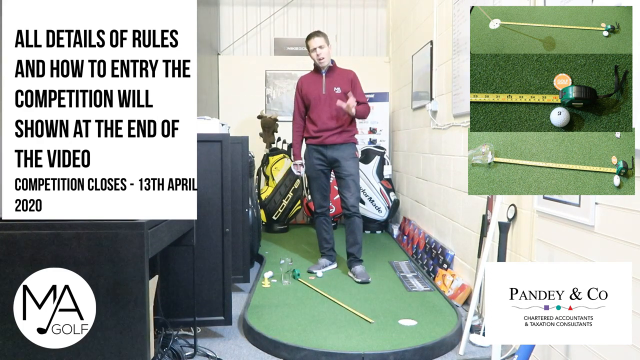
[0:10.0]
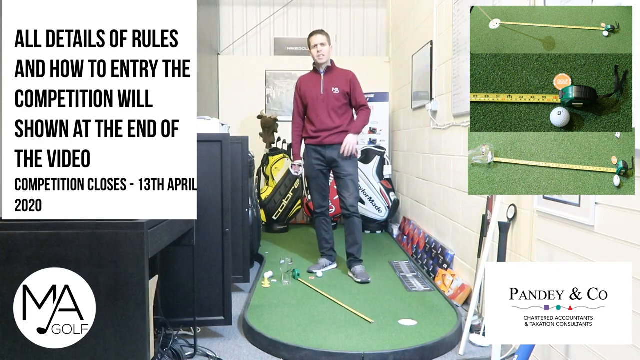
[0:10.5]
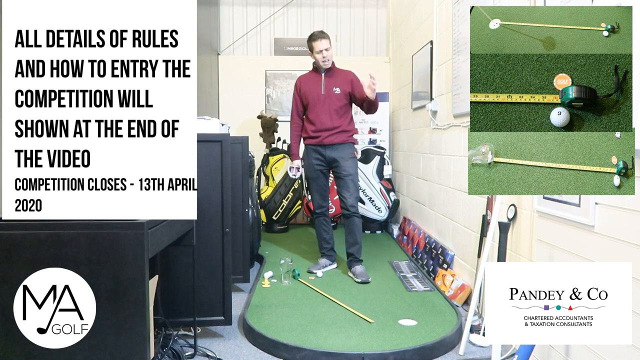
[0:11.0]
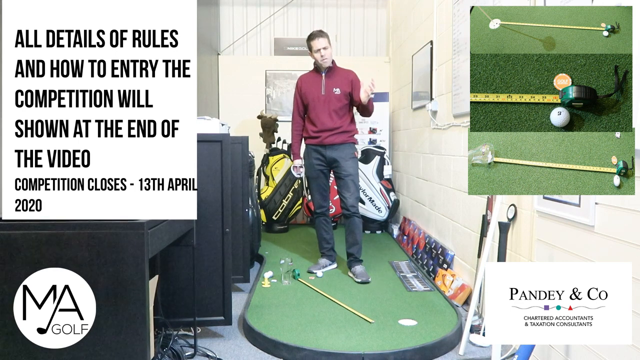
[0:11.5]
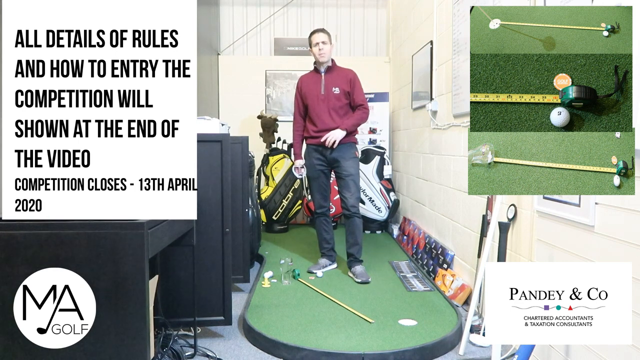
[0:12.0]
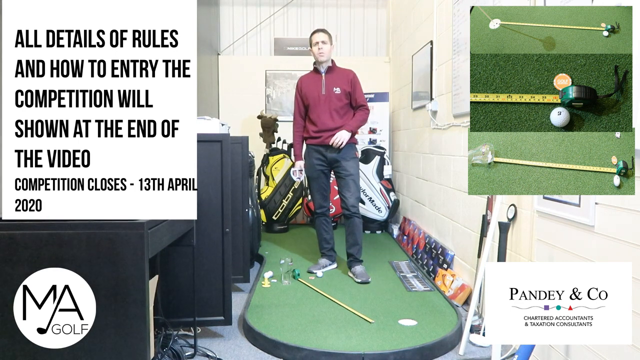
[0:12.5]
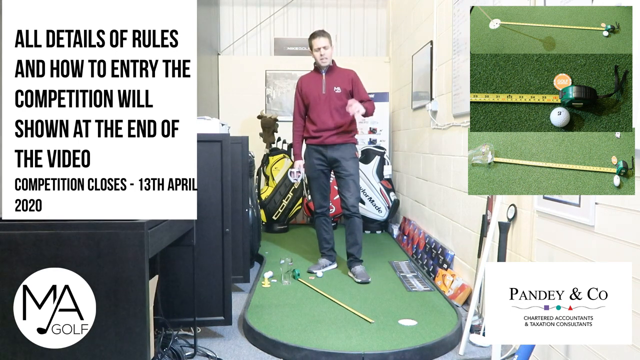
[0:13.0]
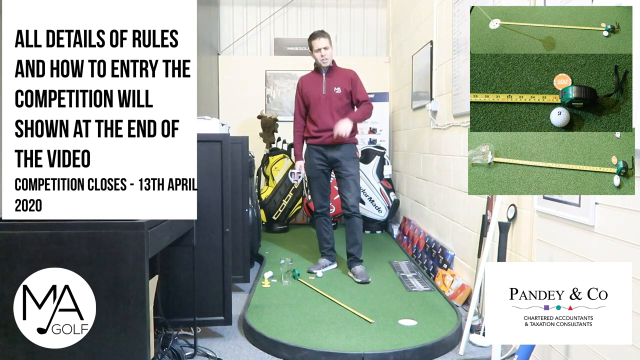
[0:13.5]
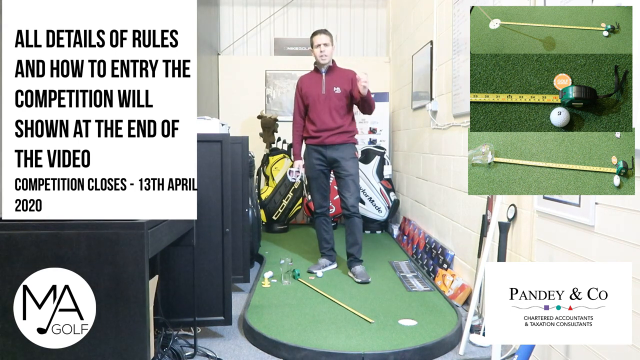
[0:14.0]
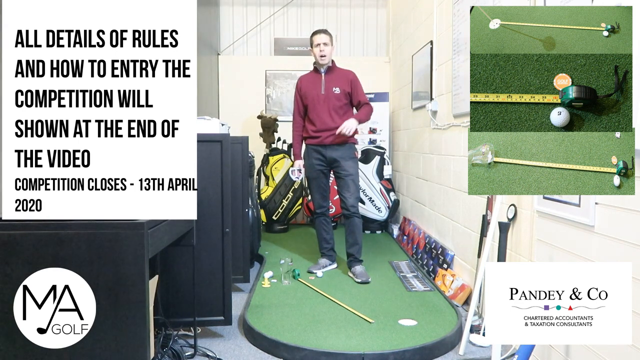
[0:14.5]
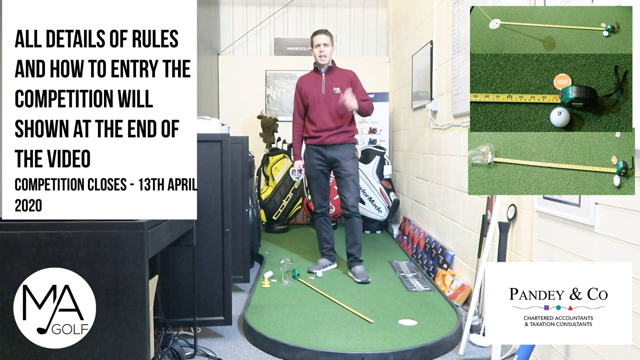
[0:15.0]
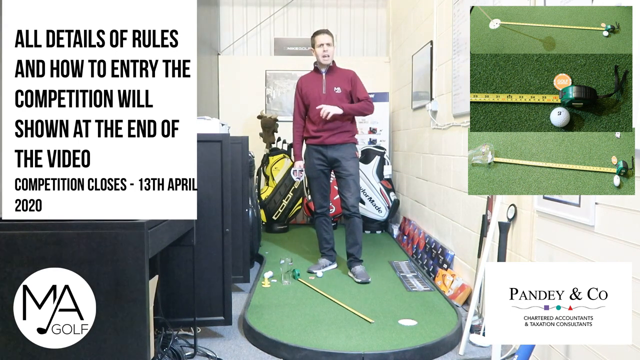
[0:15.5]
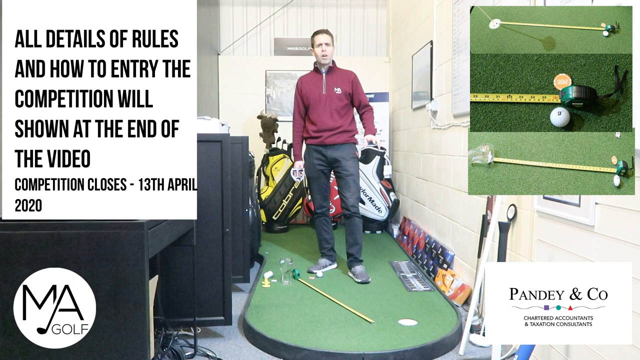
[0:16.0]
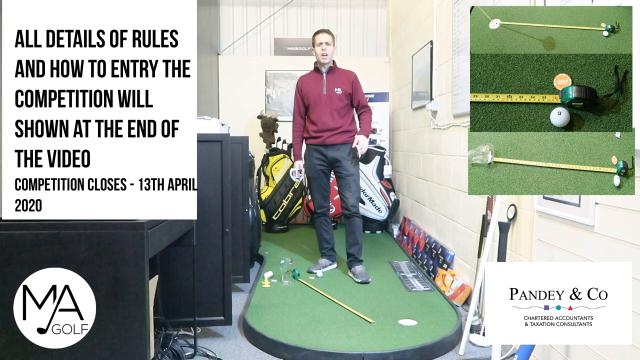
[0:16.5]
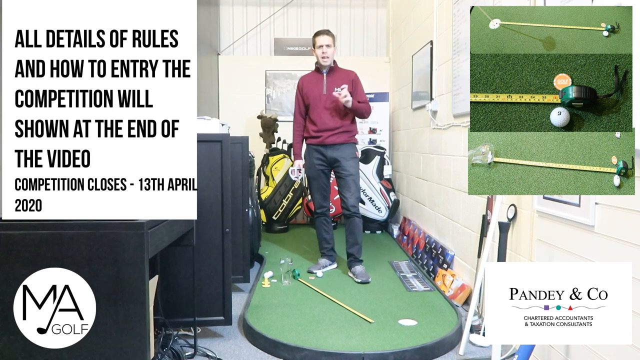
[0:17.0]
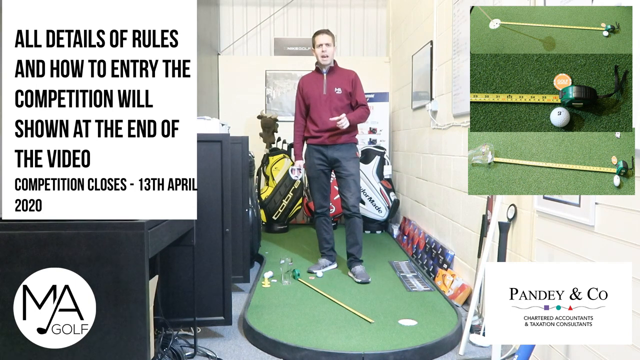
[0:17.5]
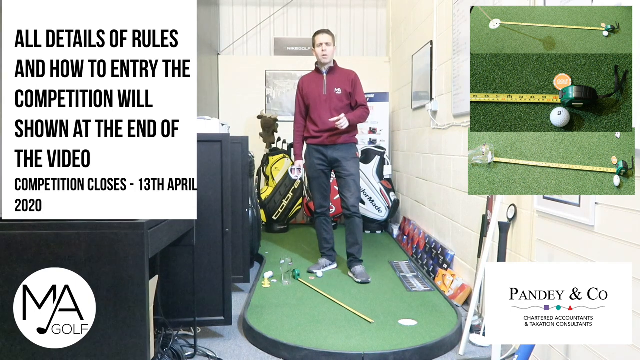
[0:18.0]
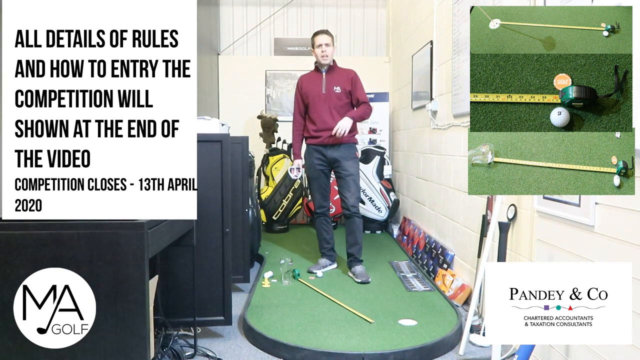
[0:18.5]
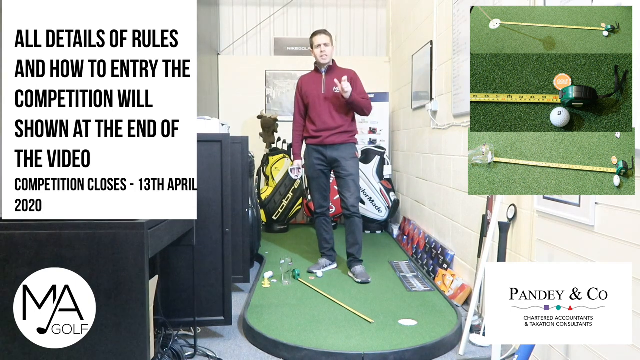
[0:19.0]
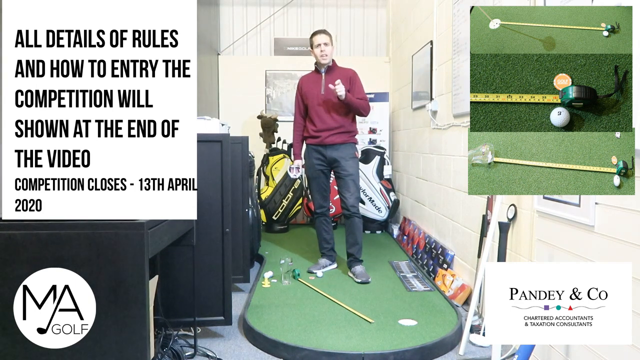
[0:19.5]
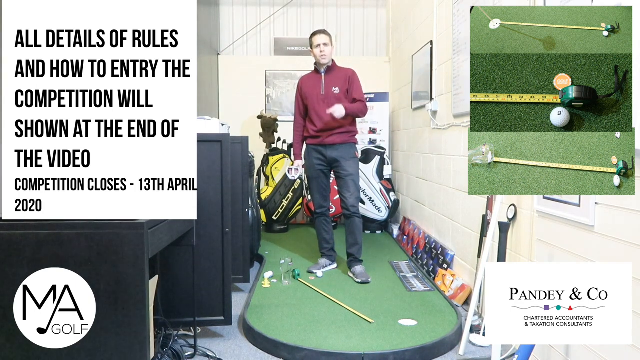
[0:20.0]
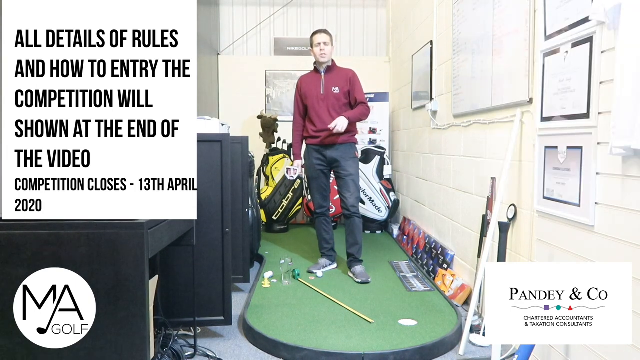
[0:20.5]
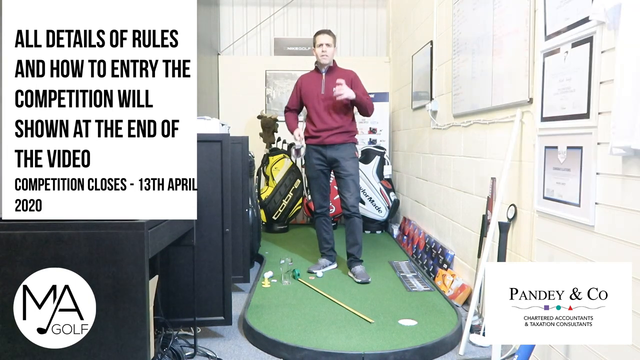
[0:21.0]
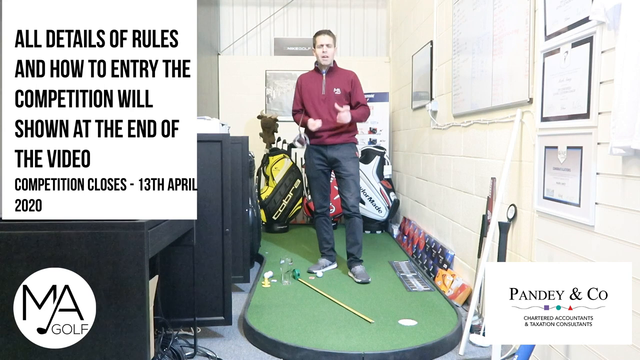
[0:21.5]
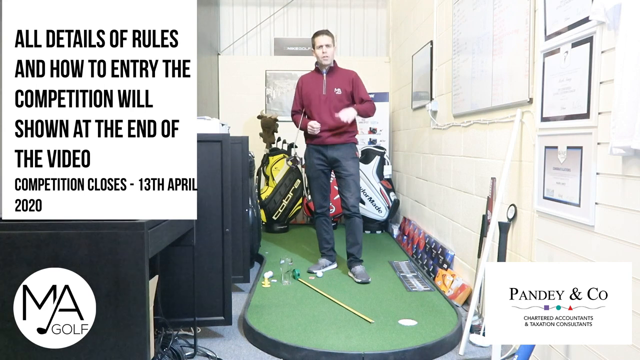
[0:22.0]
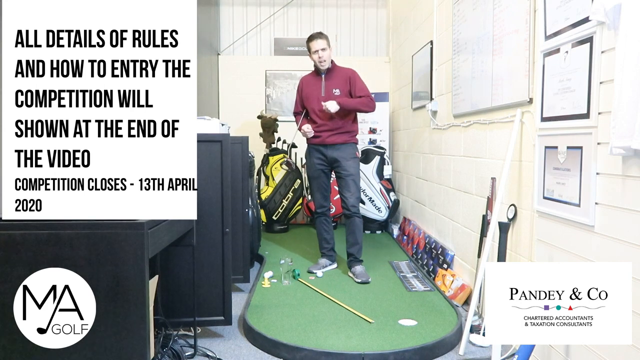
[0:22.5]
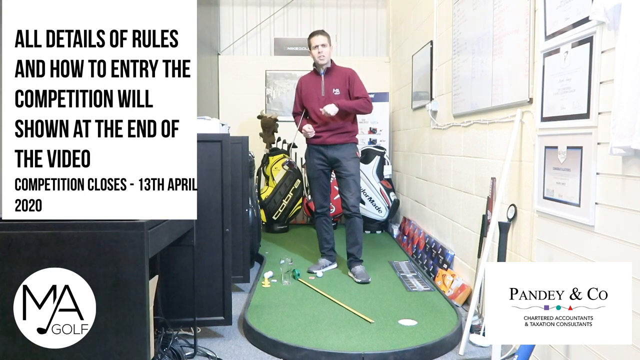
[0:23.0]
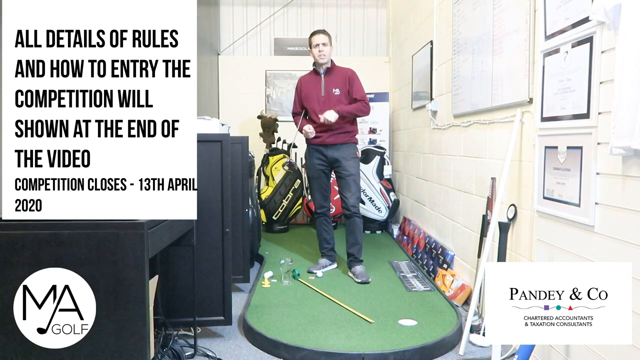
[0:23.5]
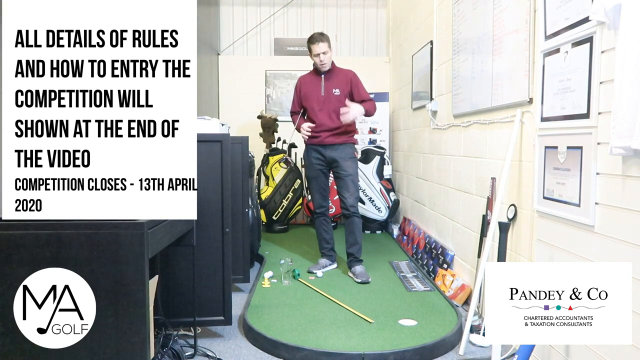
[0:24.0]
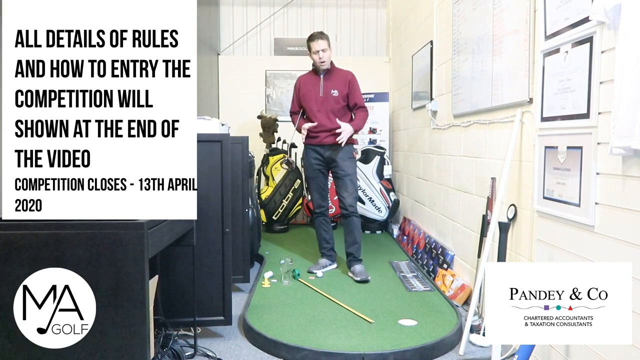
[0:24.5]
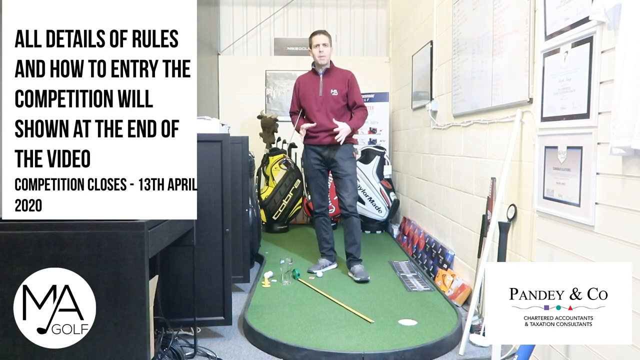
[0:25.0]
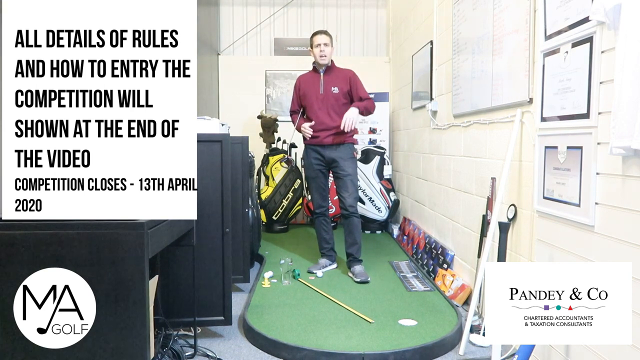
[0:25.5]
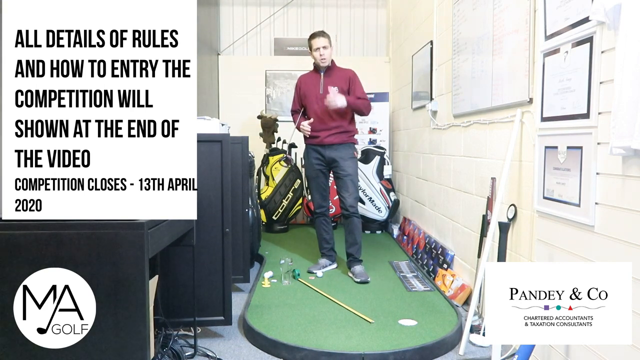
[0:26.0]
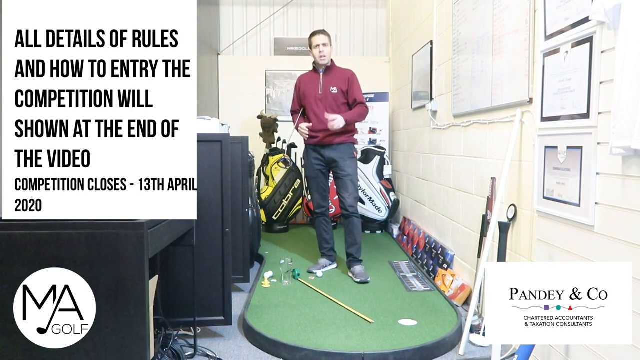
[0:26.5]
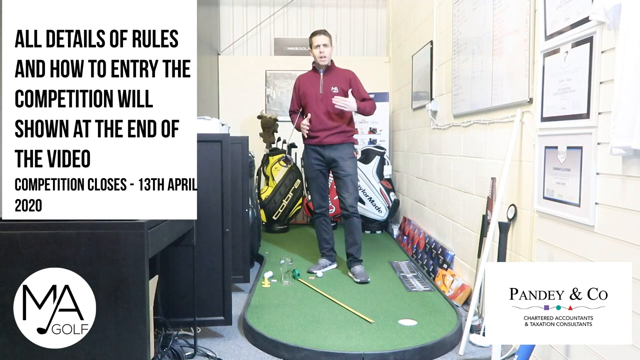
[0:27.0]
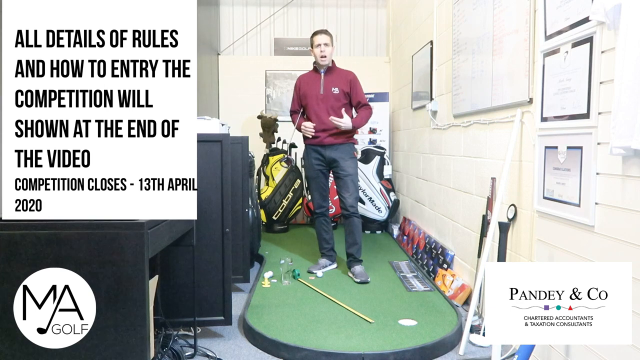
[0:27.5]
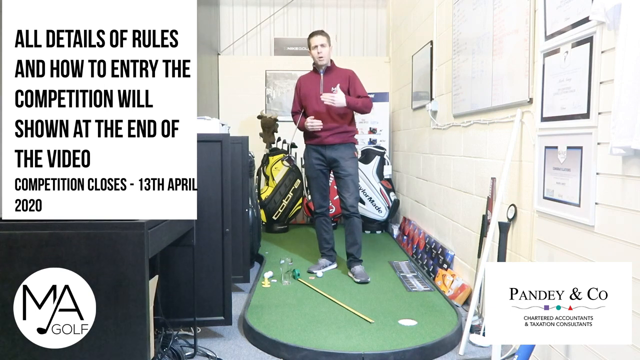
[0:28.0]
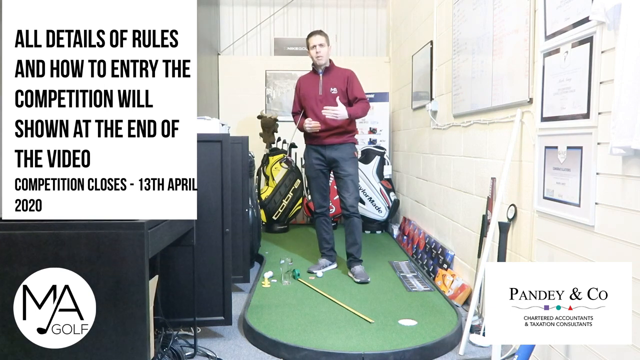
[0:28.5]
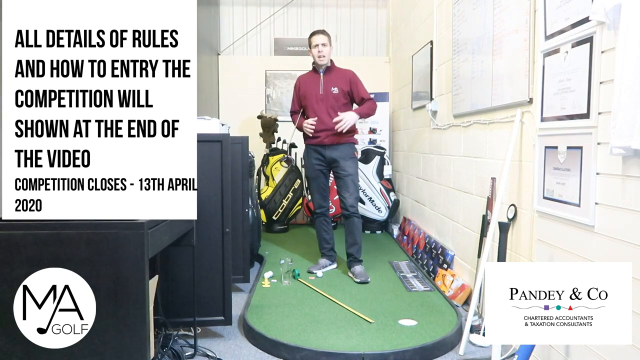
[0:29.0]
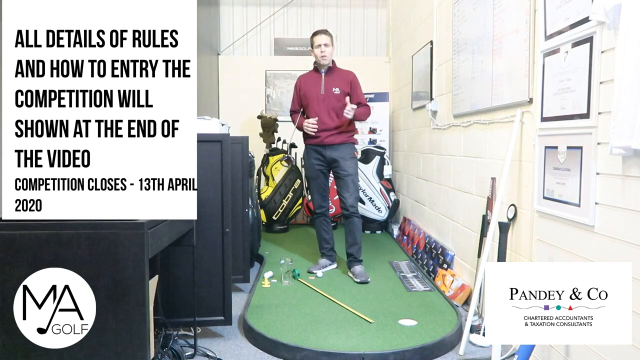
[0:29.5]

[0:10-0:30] The man in the middle of the screen talks to the camera, moving his left hand a lot. He wears a red-burgundy pullover, black trousers and grey trainers. He holds a golf club in his right hand, then lifts it up and puts it under his arm, just below his armpit, and starts making a motion with both hands. His left hand moves up and down, gesturing with the palm towards him and the back of the hand towards the camera, moving forwards and backwards. In the bottom left of the screen is a logo for MA Golf in a white circle, with "MA" in black and "golf" in a smaller font below it. The sponsors at the bottom are Pandy and Co, with text reading "Chartered Accountants and Taxation Consultants". Their logo is a squiggly line with a purple square, a green circle and a red triangle.